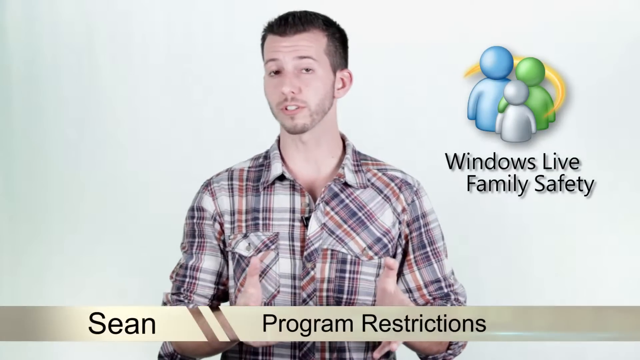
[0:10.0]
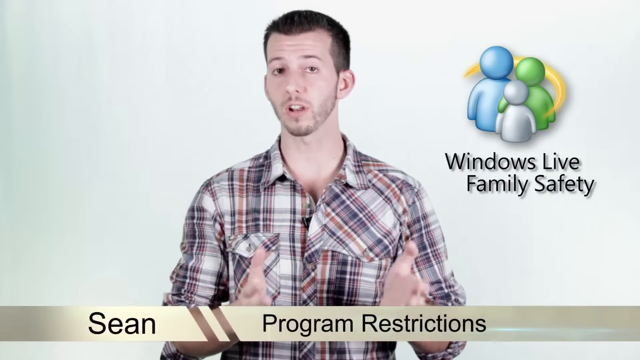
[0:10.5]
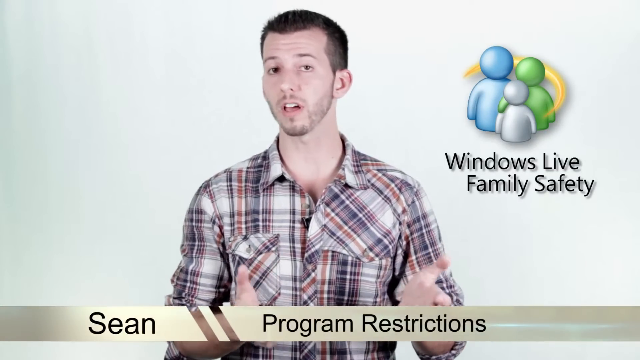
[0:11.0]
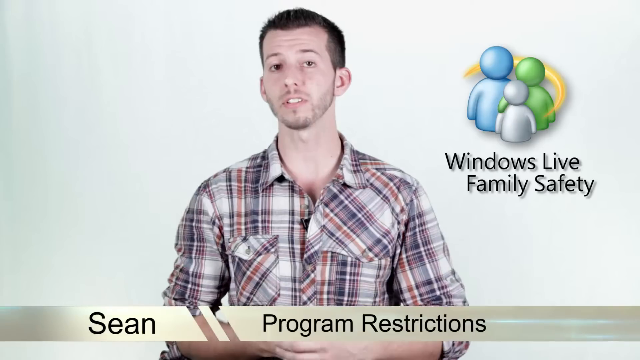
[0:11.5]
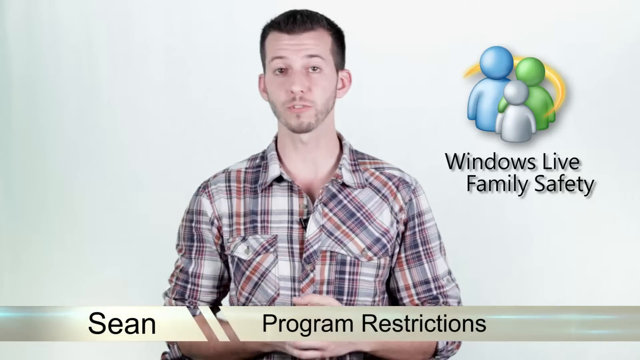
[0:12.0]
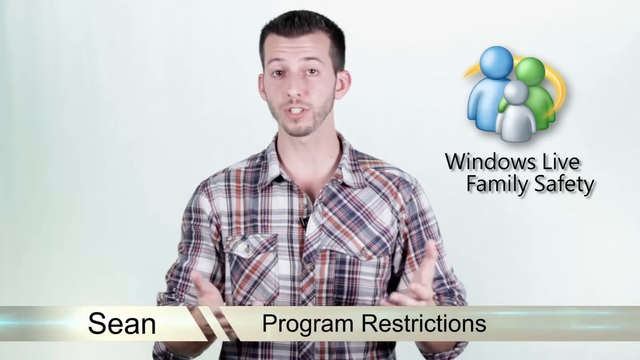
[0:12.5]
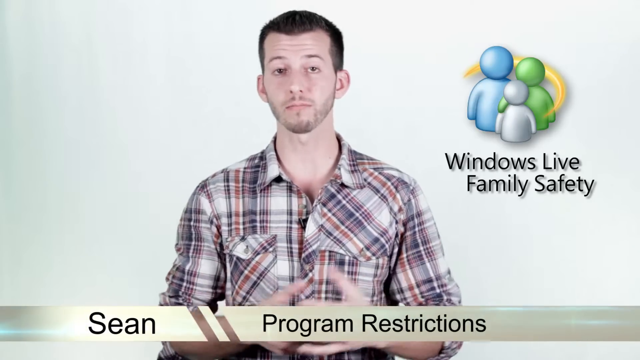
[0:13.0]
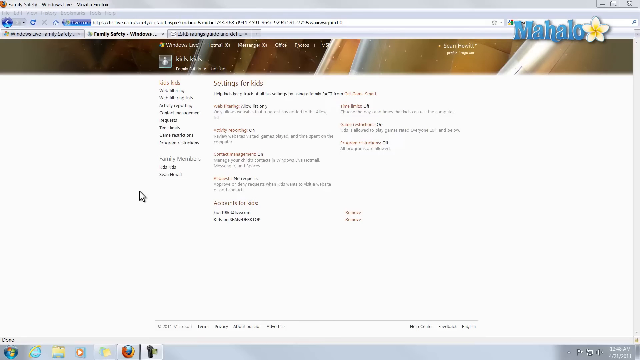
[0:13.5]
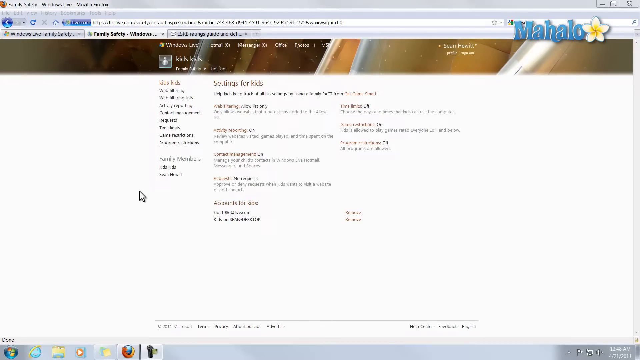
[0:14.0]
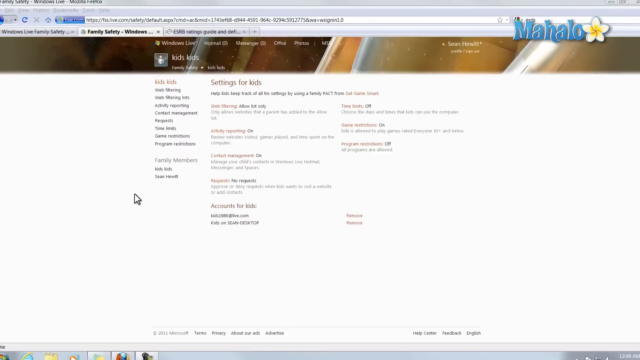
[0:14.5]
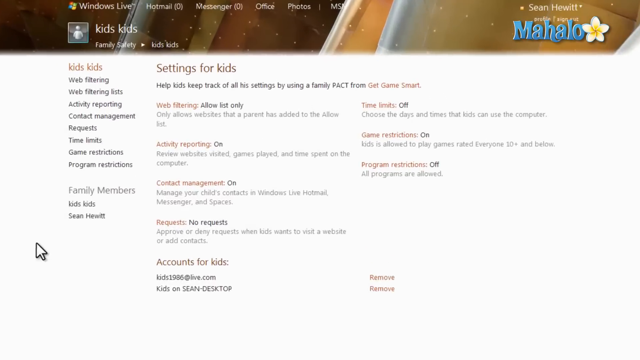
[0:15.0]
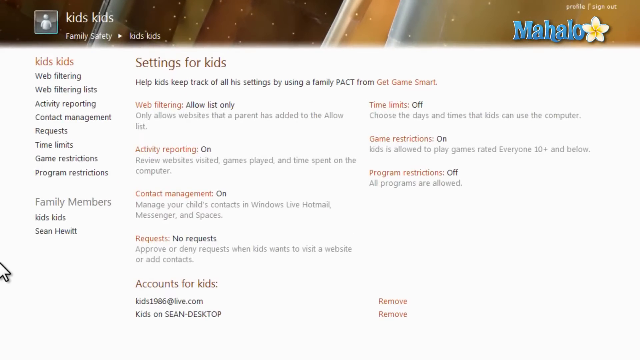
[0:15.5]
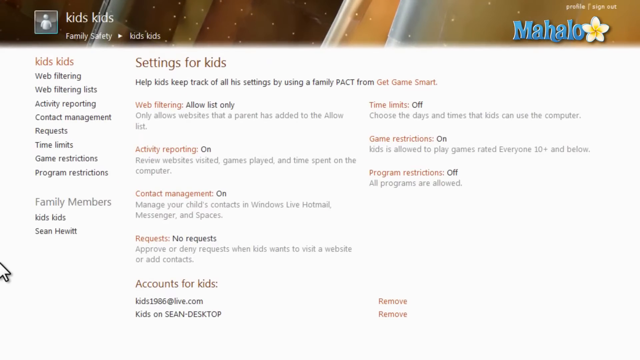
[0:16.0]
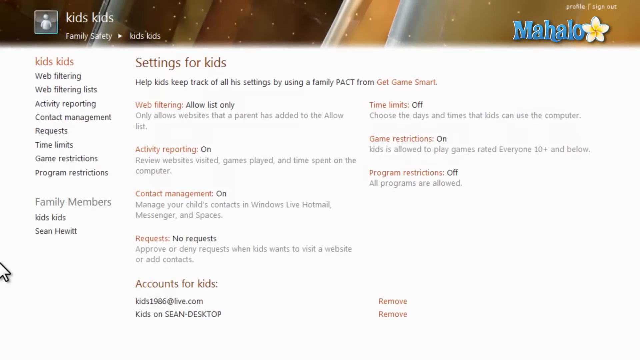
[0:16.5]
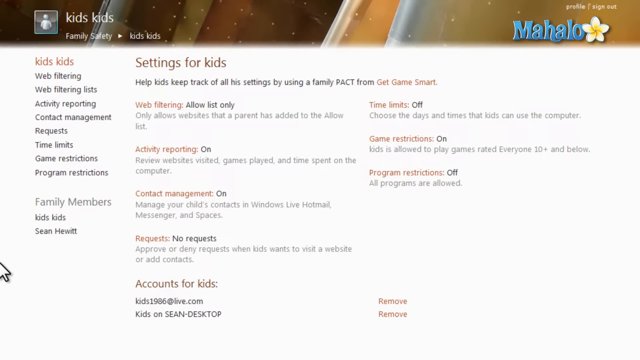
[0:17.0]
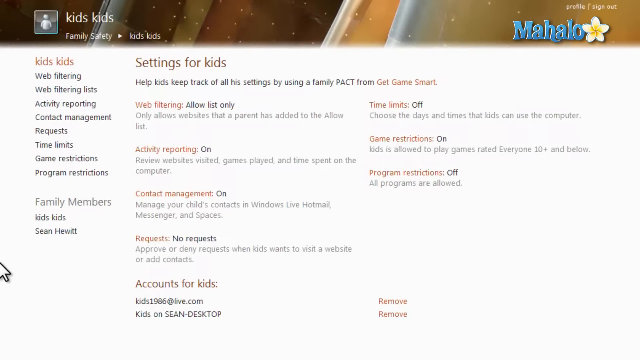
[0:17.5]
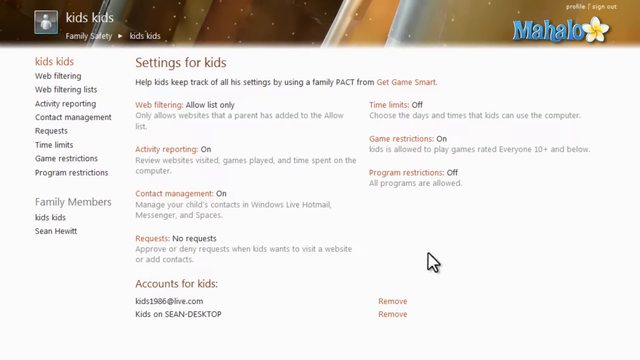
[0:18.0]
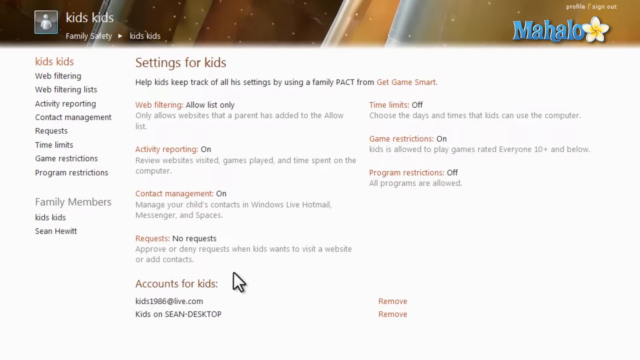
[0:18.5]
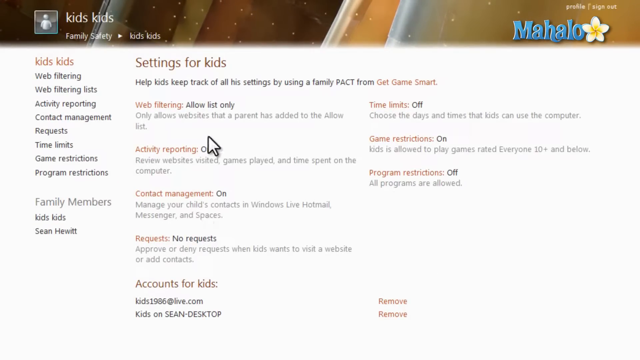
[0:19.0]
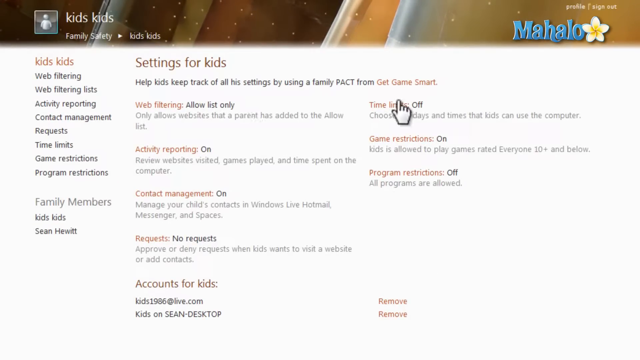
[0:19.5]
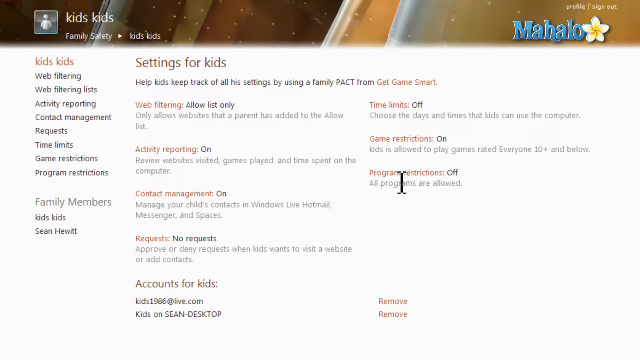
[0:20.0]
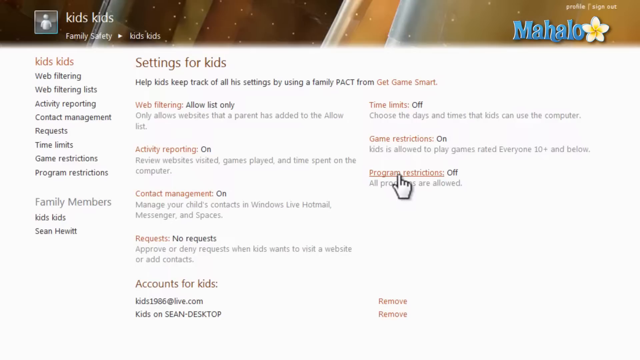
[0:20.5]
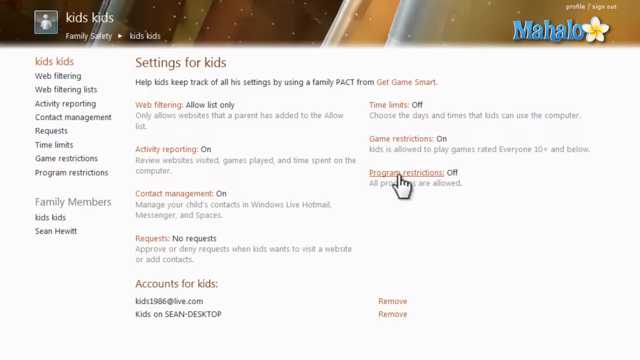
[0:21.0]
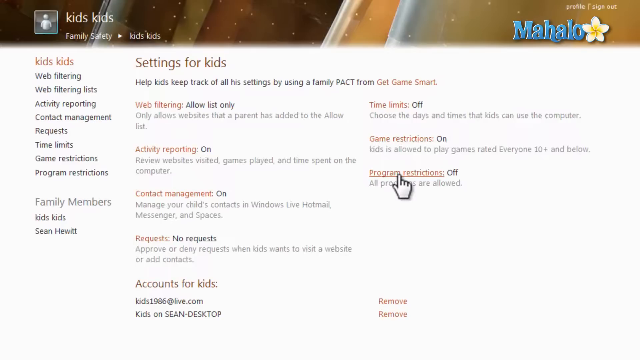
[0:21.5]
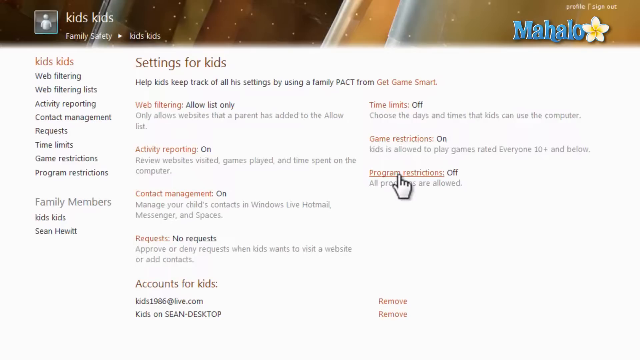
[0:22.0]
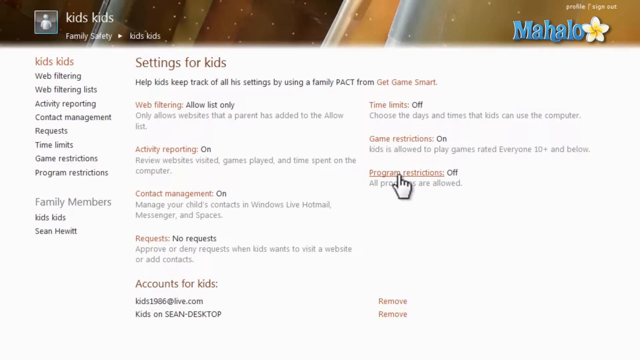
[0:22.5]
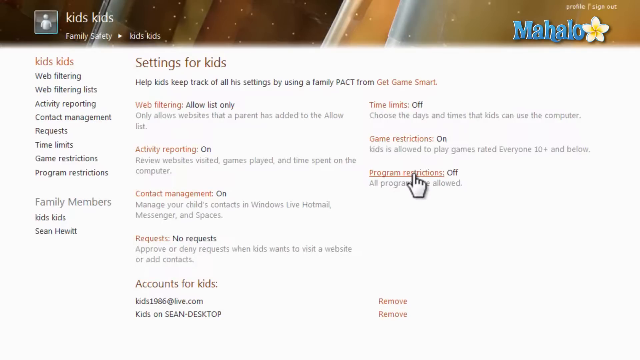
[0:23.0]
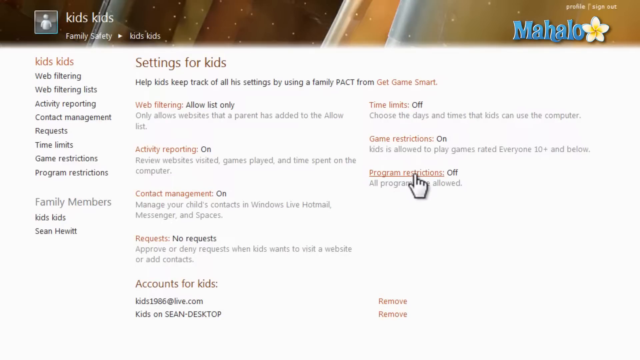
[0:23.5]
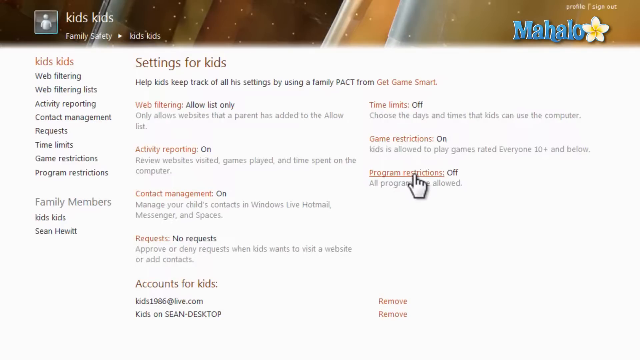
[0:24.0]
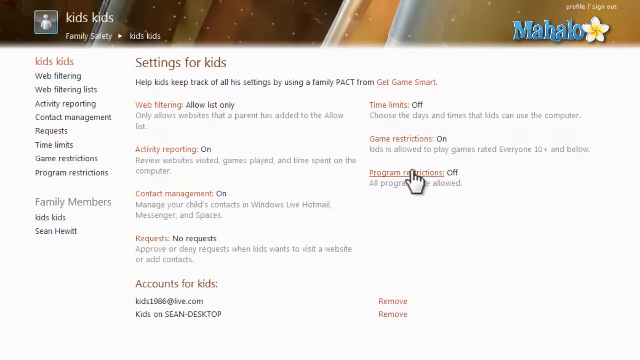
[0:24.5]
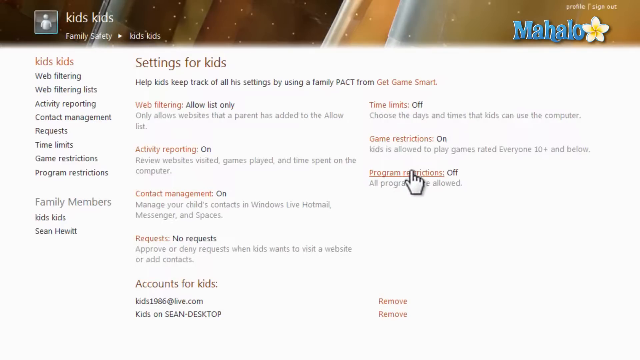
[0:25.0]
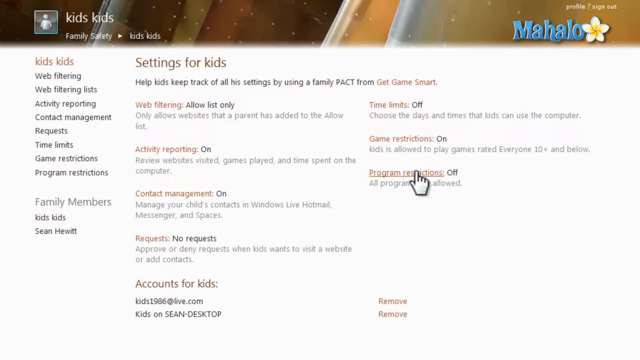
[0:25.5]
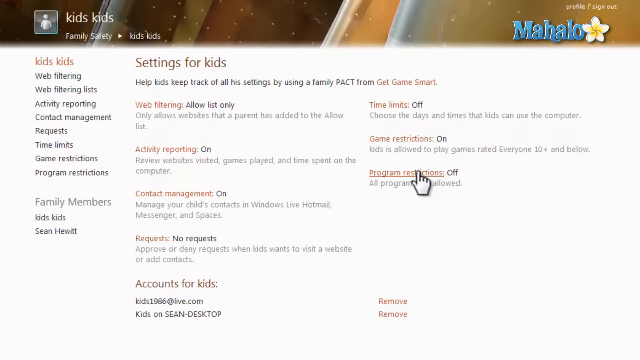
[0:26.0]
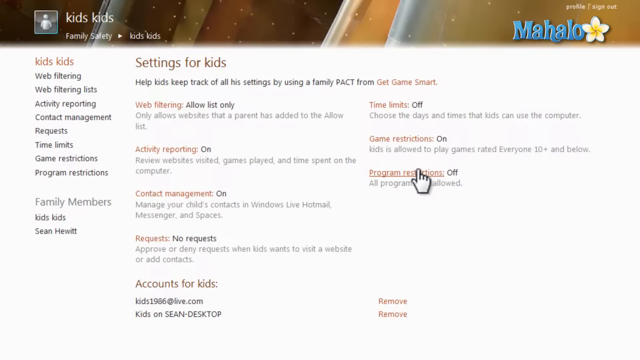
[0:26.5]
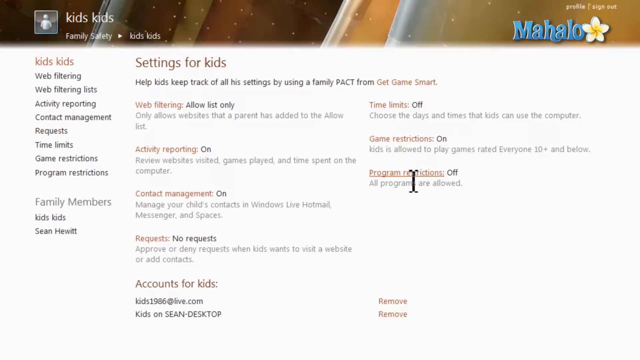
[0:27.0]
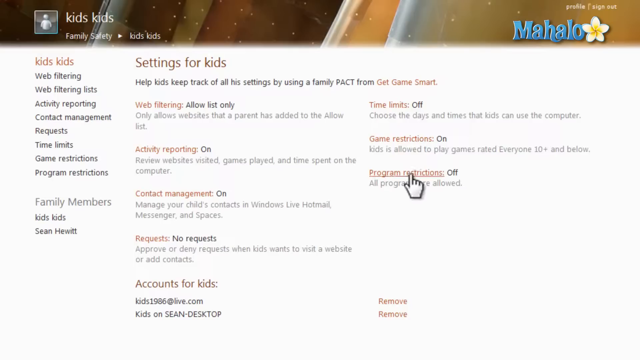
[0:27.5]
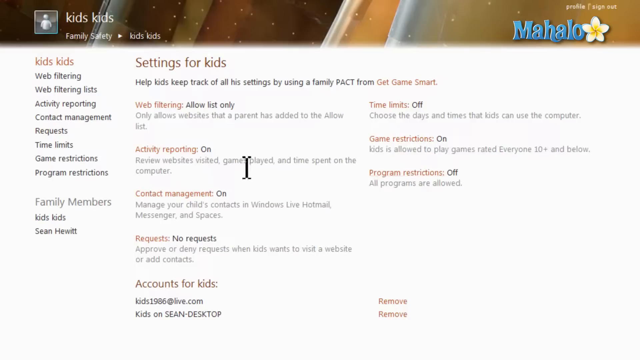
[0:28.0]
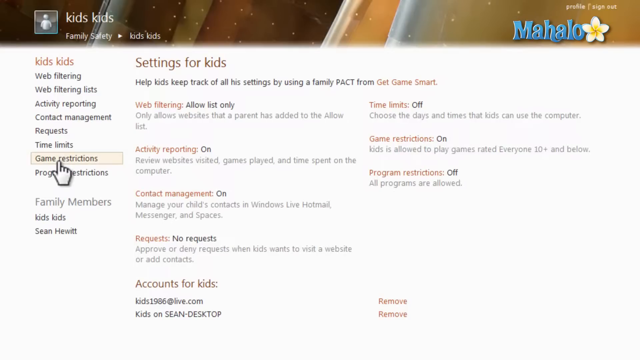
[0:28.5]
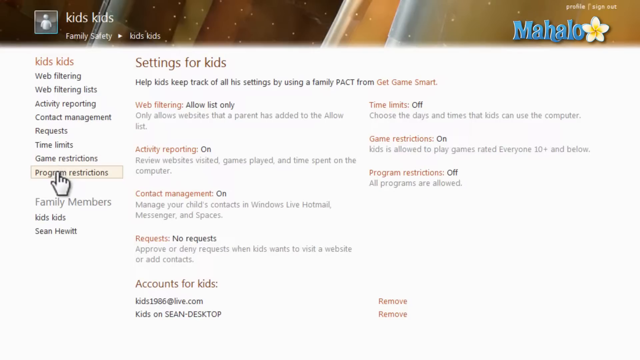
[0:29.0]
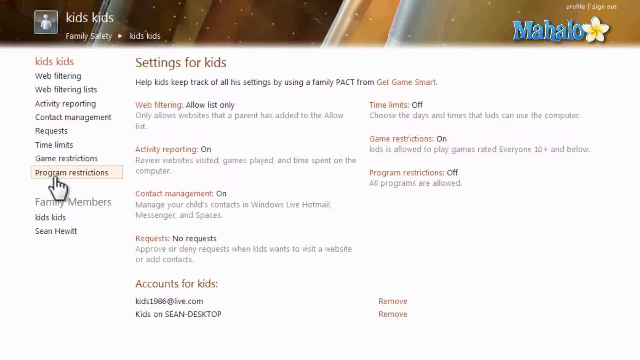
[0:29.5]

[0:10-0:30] Sean continues talking, shaking his hands toward the viewer with the backs of his fingers pulled up and down. The video then switches to the settings for program restrictions. The user's account, or possibly the program section, is called "Kids Kids." The main center reads "settings for kids," followed by a number of descriptions that can be turned on and off. Between that and the options is more text reading "help kids keep track of all his settings by using a family pact from Get Game Smart." Sean moves his mouse around, probably speaking generally about the options. He goes to the second column, bottom rightmost option, called "Program Restrictions," which is currently set to off. He hovers over it, probably talking about it for a while, before moving to the left, where various options are listed. This list also includes Program Restrictions and seems to match the on and off options in the middle, shown as numbered lists on the side.